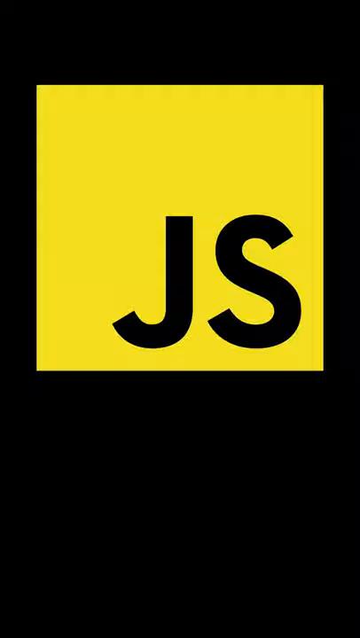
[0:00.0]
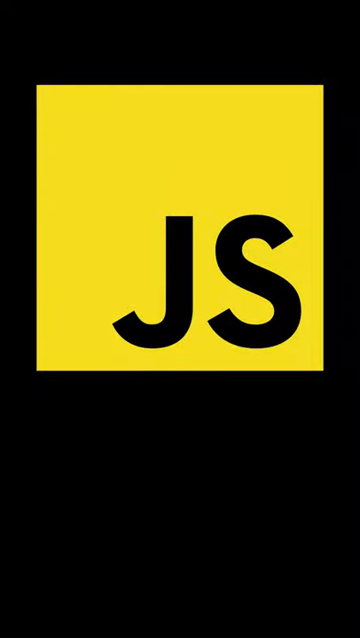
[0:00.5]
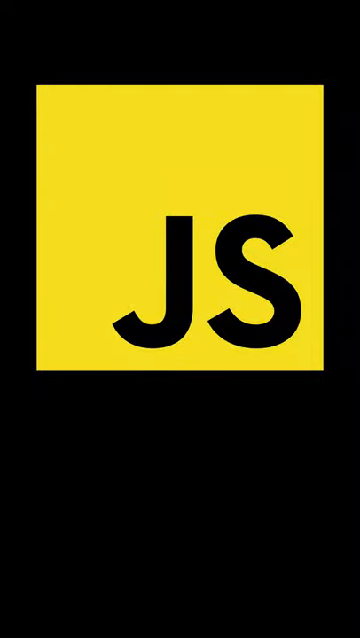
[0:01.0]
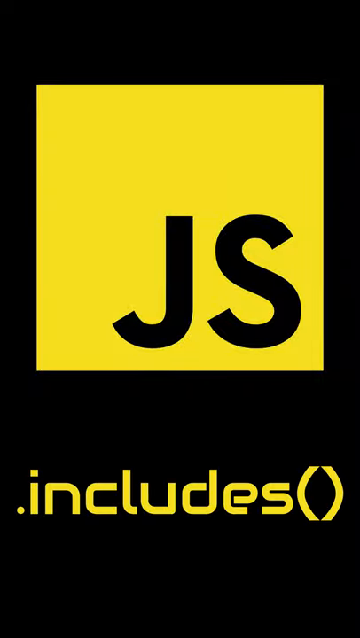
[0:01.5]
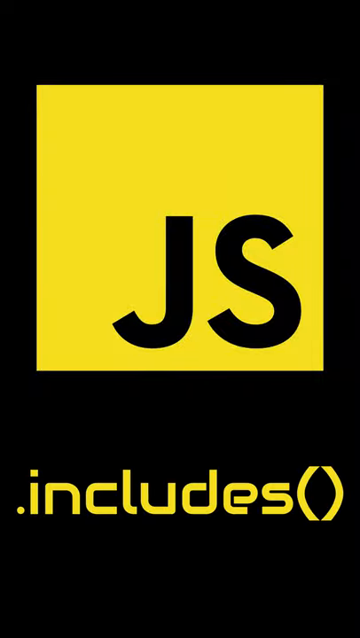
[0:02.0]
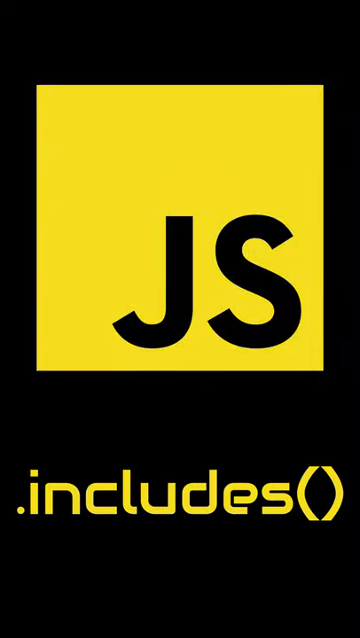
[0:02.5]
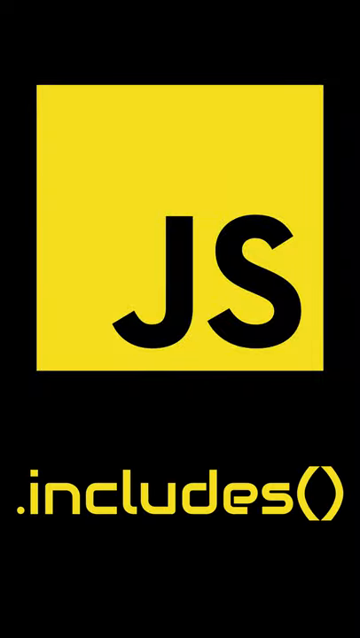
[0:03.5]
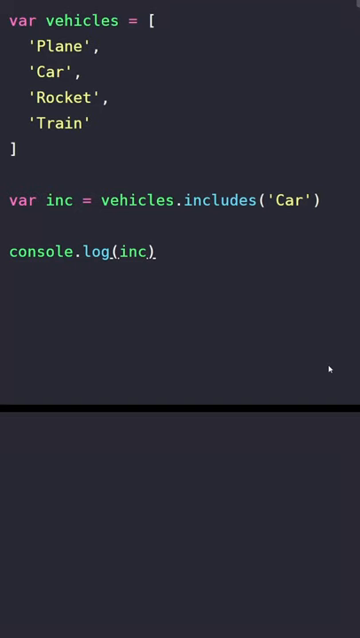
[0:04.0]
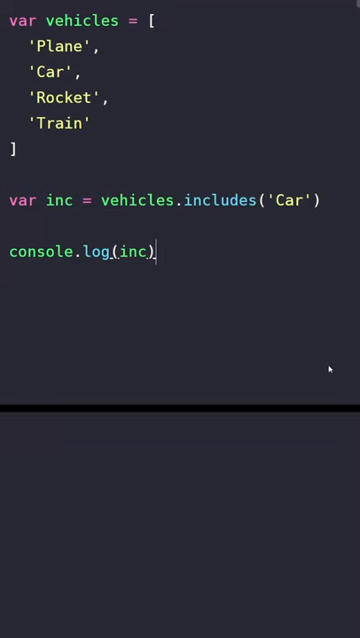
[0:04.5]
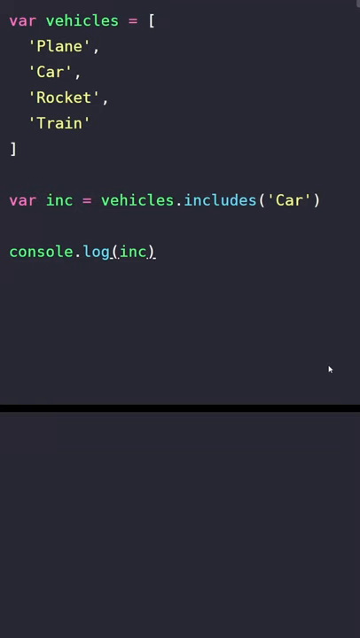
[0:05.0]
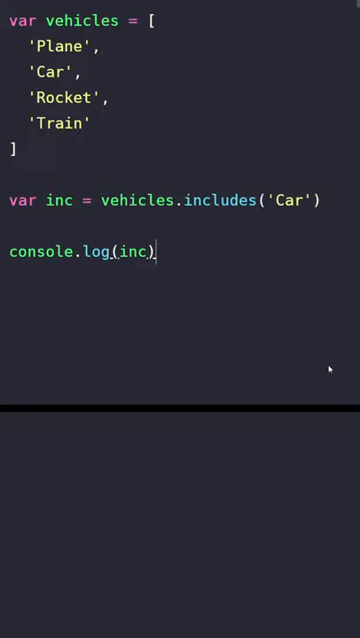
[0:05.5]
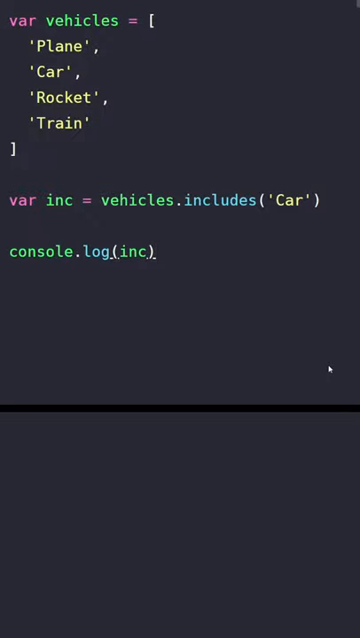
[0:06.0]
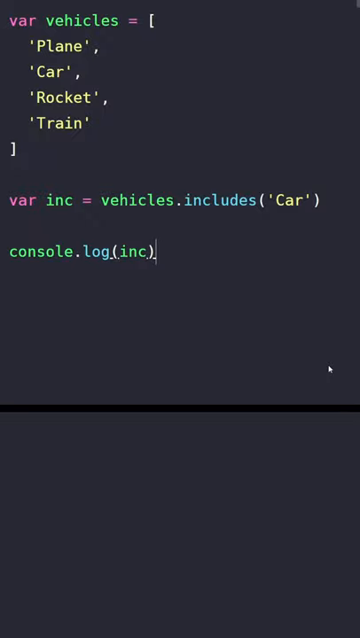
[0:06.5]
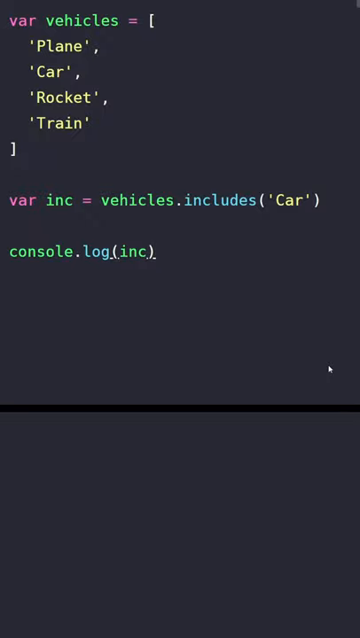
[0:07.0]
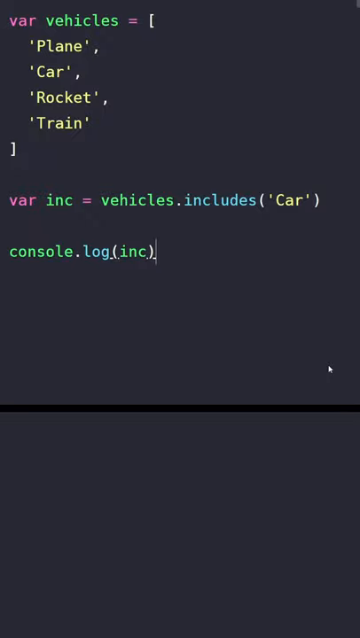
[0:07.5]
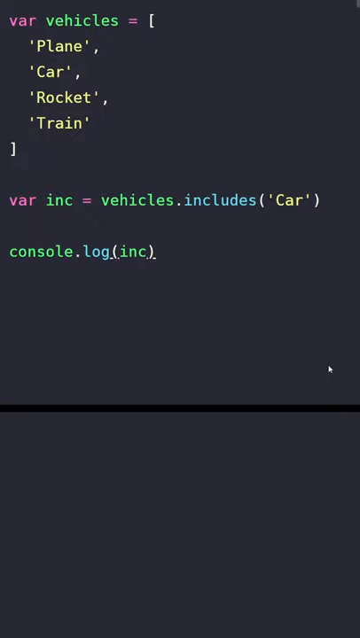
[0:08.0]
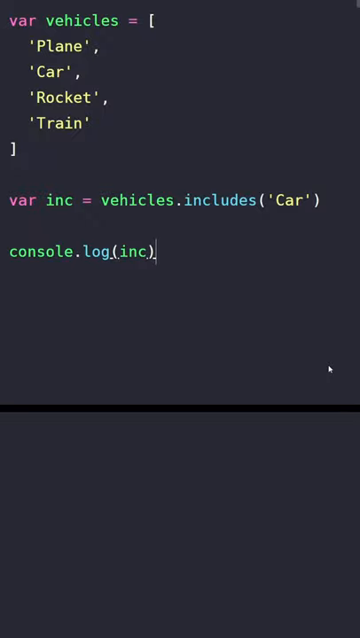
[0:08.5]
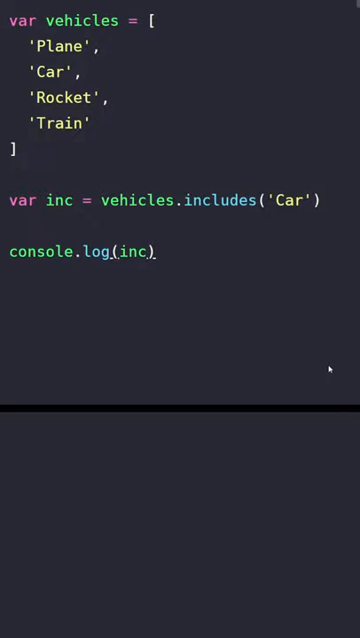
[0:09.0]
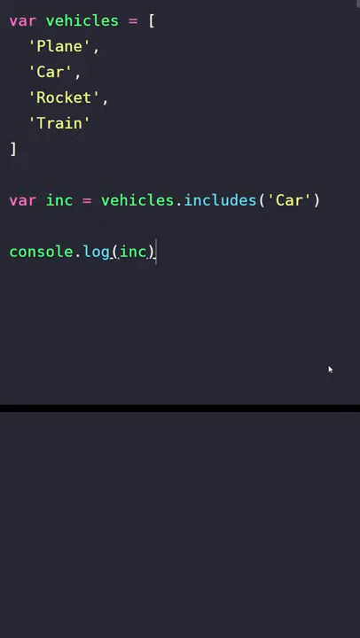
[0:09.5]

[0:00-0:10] What looks like a logo appears on an entirely black background: a yellow square in the middle, with two black letters, "JS", at the bottom right of the square. Below it, at the bottom, text reads ".includes()". The video then shows what looks like a computer screen with code in pink, green, white, yellow and blue. The code reads "var vehicles =" followed by a bracket and 'plane', continuing down with car, rocket and train, and a bracket closing it at the bottom. Underneath is "var inc = vehicles.includes" with car in parentheses, and "console.log" with inc in parentheses. A second screen at the bottom is empty, and at the bottom right of the top screen the mouse cursor appears to be just sitting there.